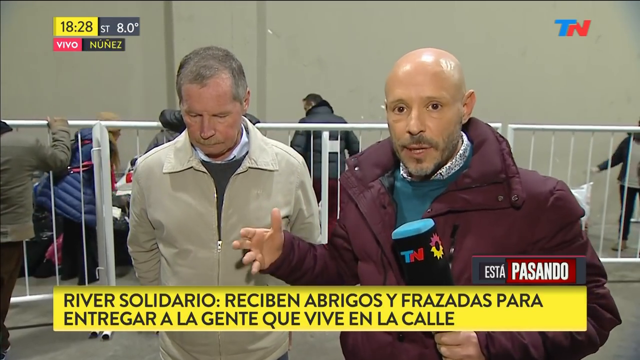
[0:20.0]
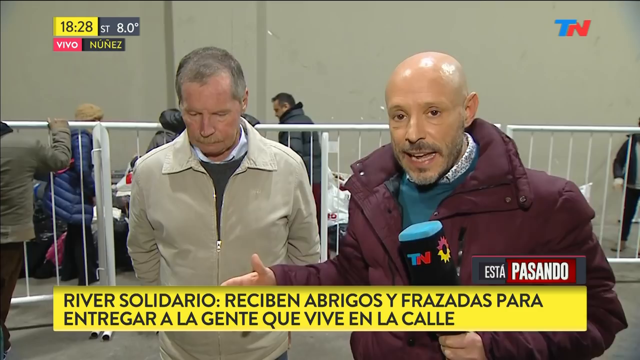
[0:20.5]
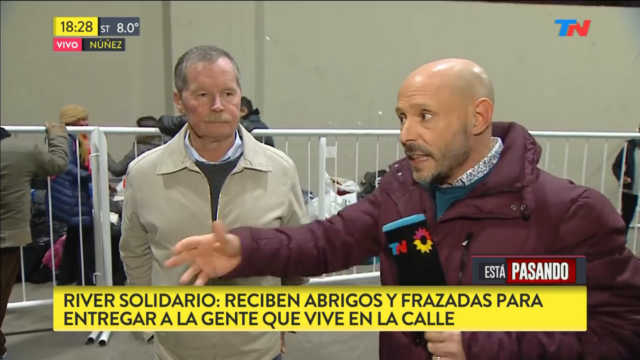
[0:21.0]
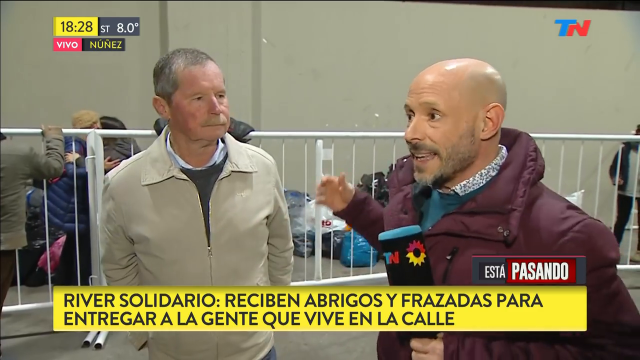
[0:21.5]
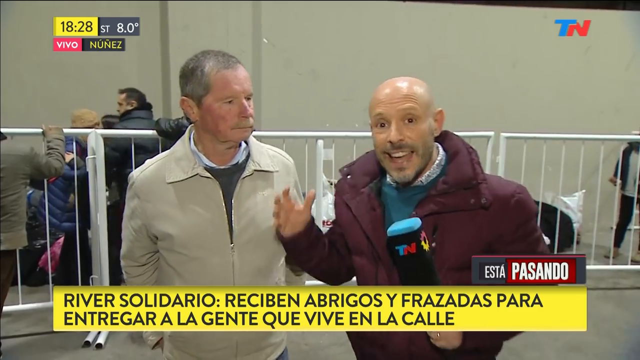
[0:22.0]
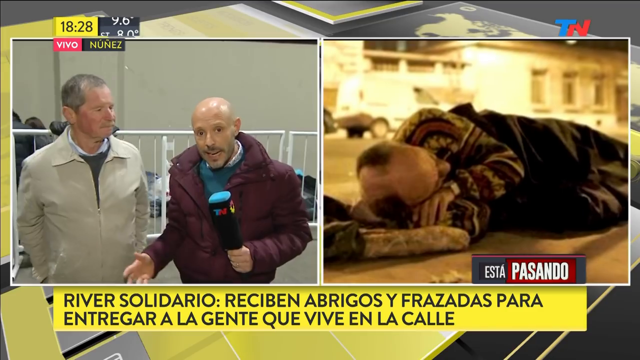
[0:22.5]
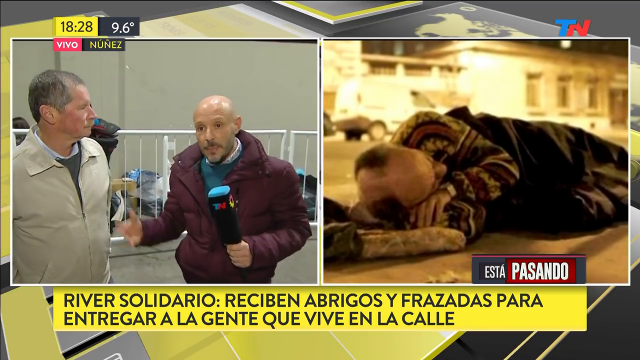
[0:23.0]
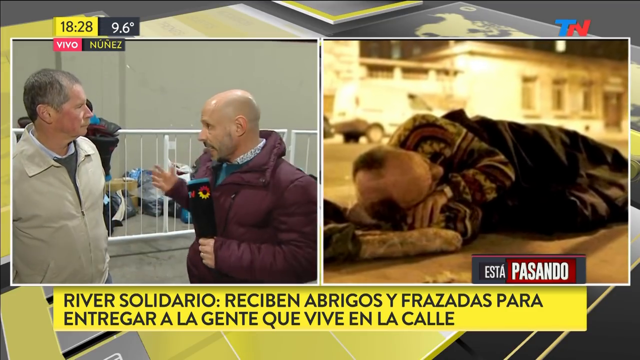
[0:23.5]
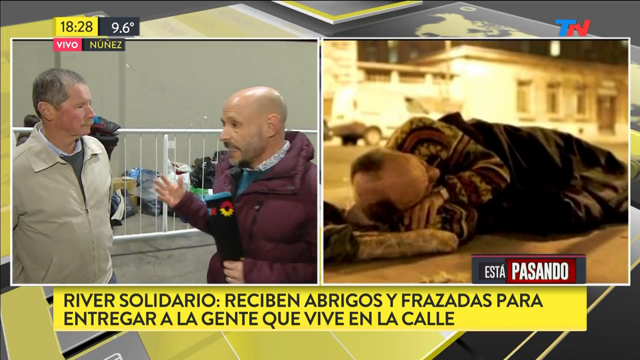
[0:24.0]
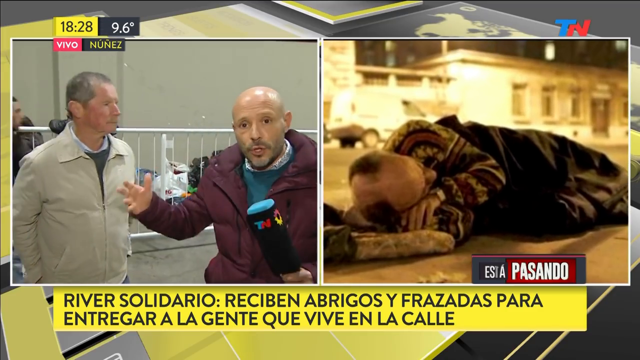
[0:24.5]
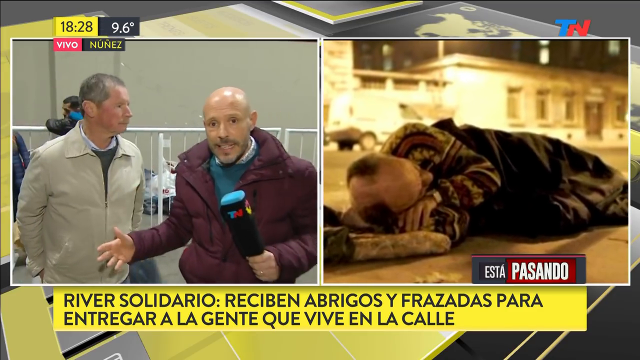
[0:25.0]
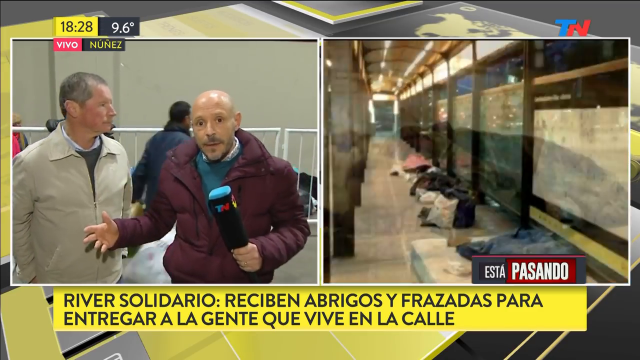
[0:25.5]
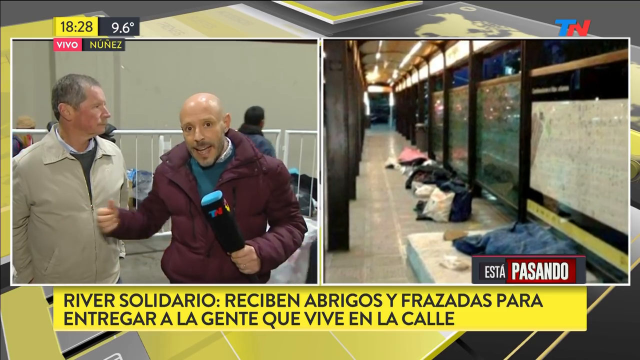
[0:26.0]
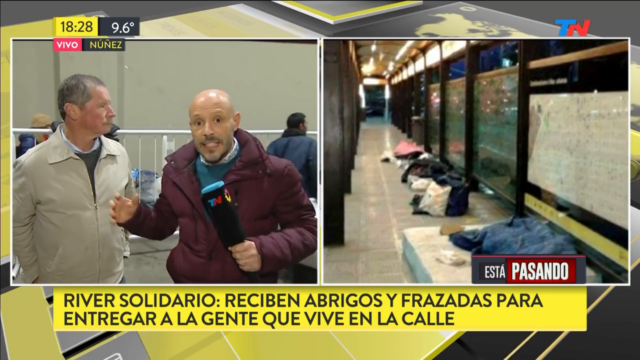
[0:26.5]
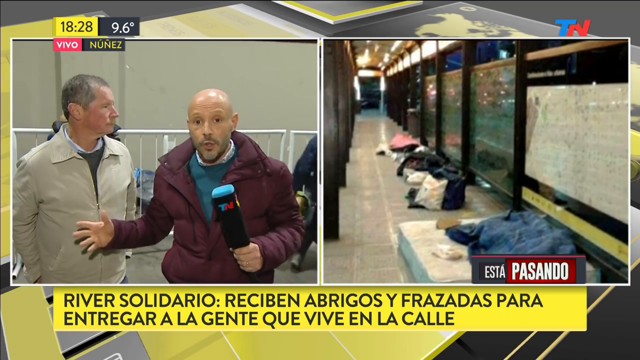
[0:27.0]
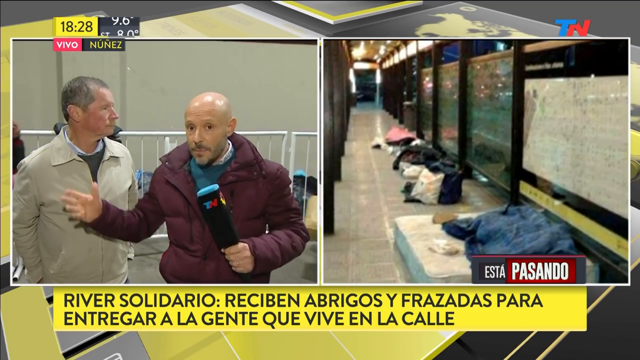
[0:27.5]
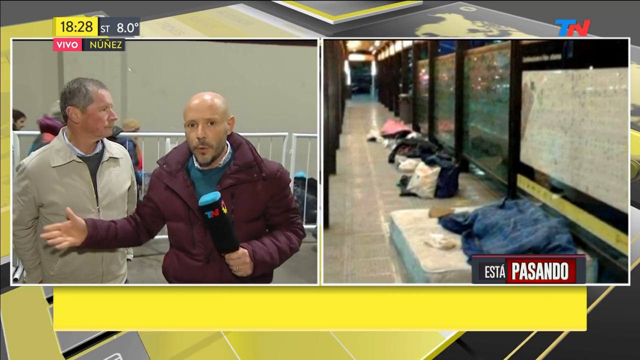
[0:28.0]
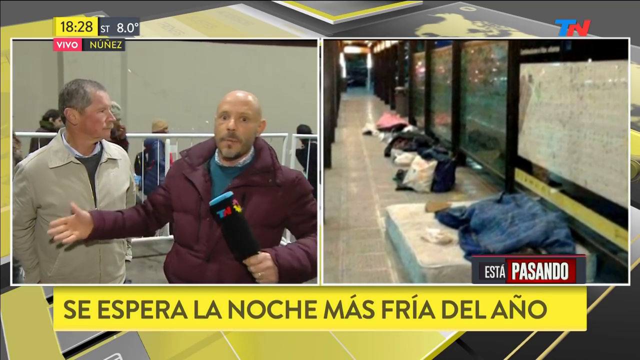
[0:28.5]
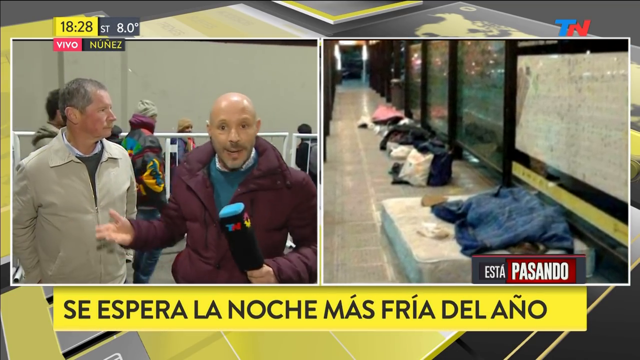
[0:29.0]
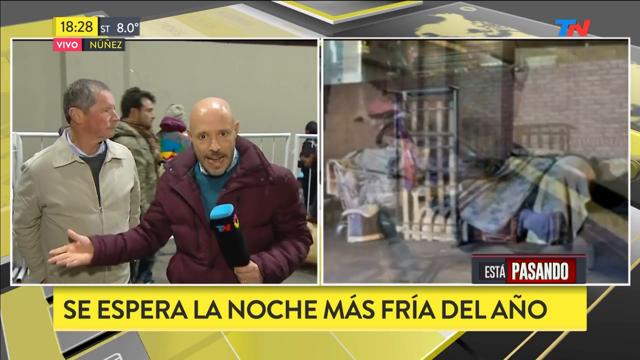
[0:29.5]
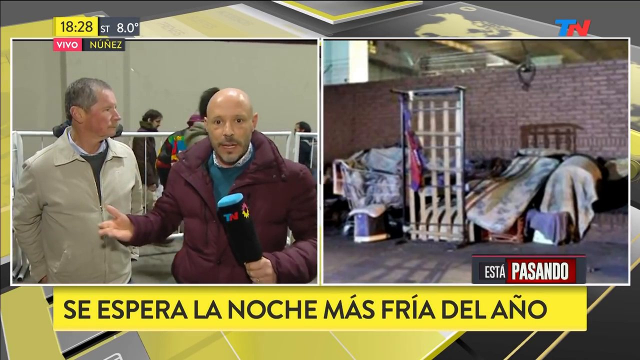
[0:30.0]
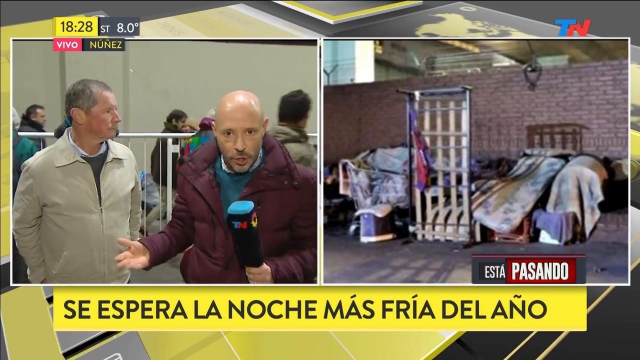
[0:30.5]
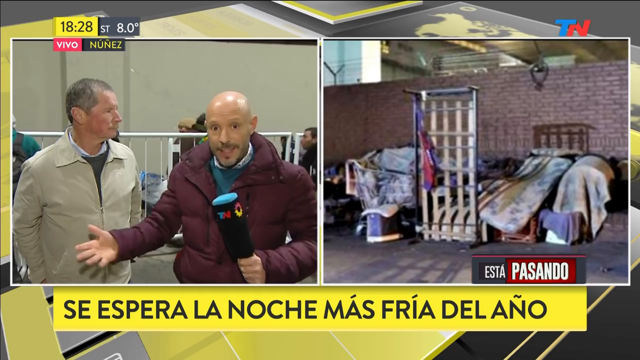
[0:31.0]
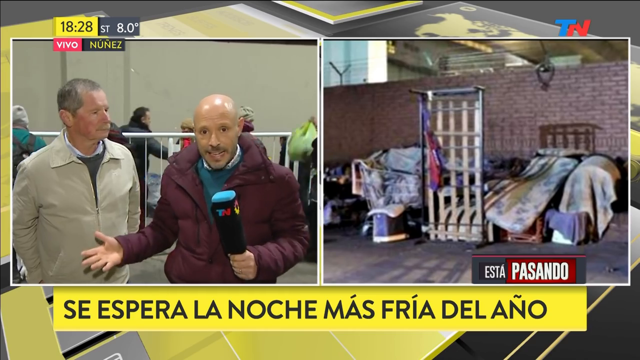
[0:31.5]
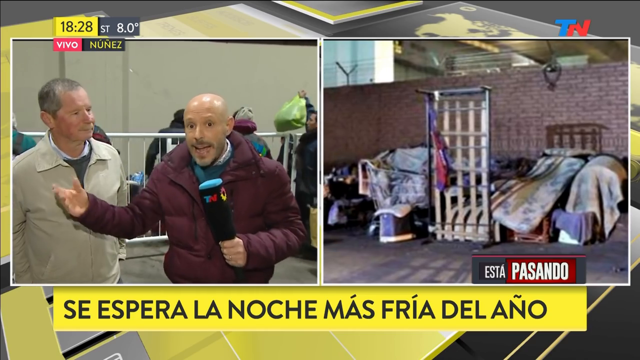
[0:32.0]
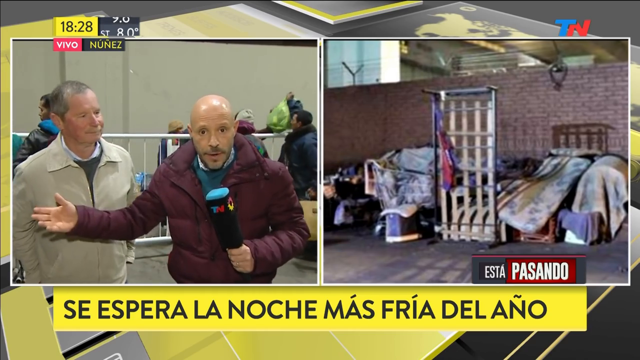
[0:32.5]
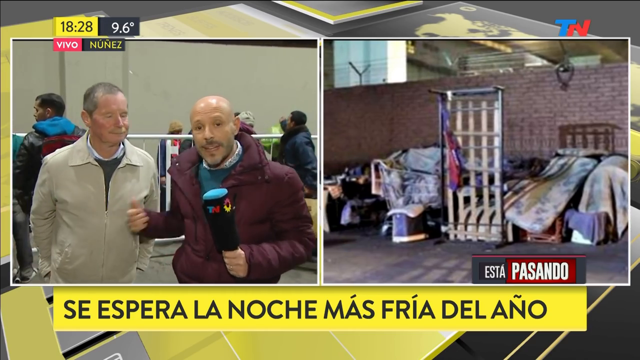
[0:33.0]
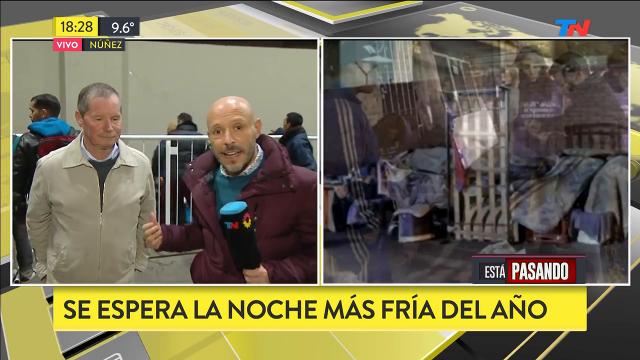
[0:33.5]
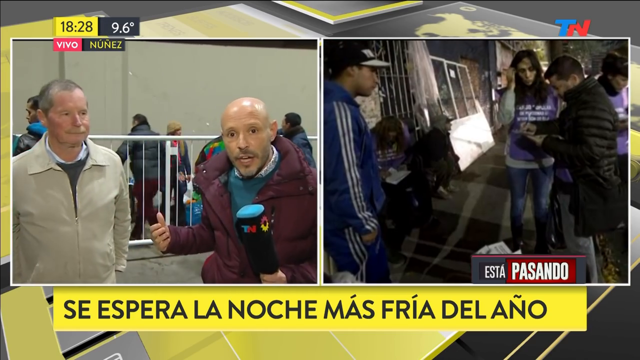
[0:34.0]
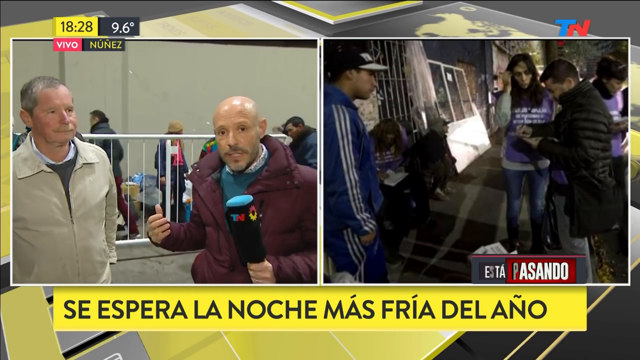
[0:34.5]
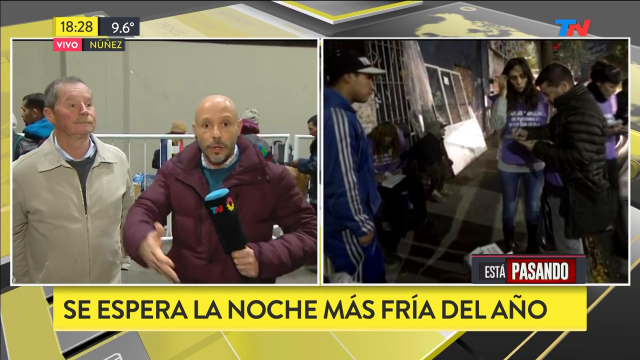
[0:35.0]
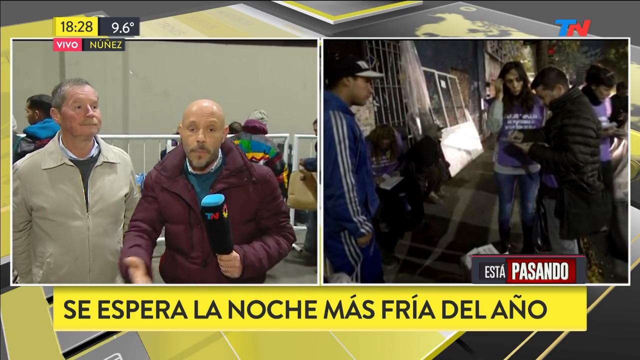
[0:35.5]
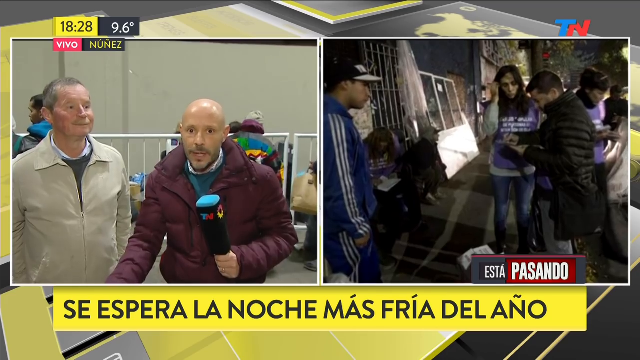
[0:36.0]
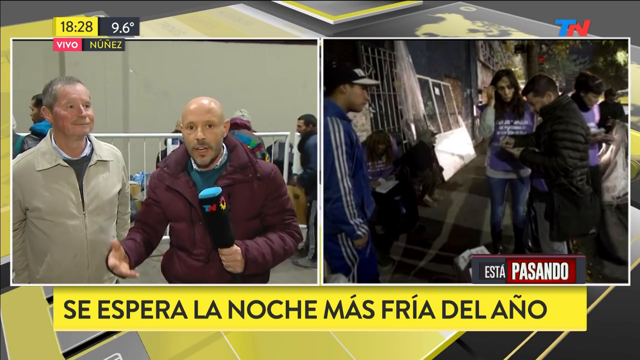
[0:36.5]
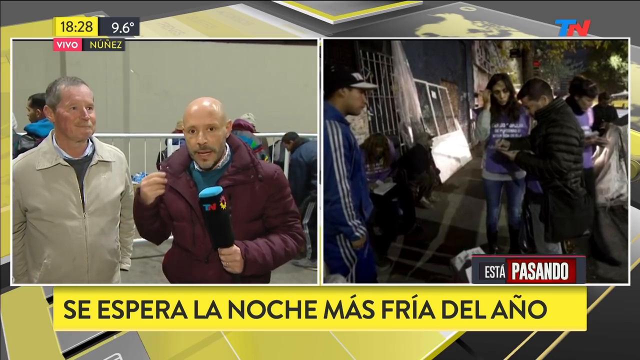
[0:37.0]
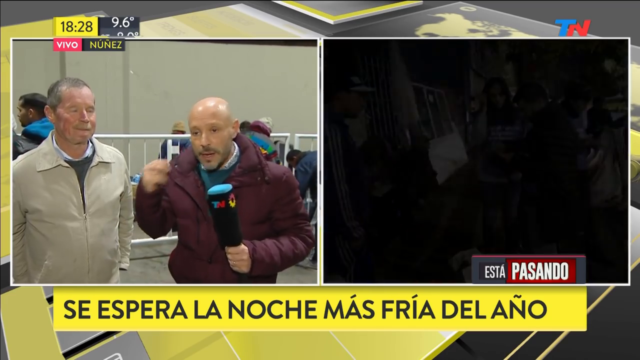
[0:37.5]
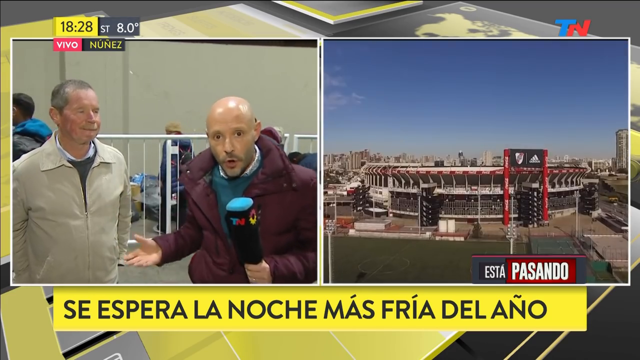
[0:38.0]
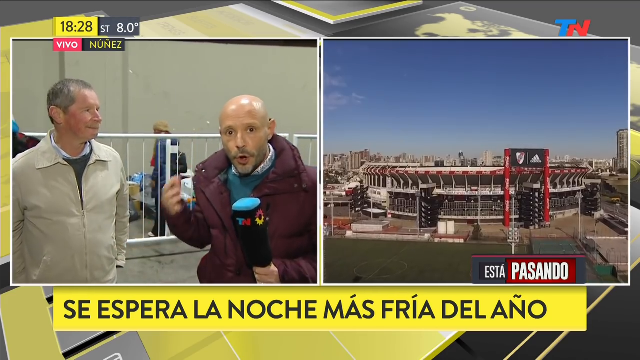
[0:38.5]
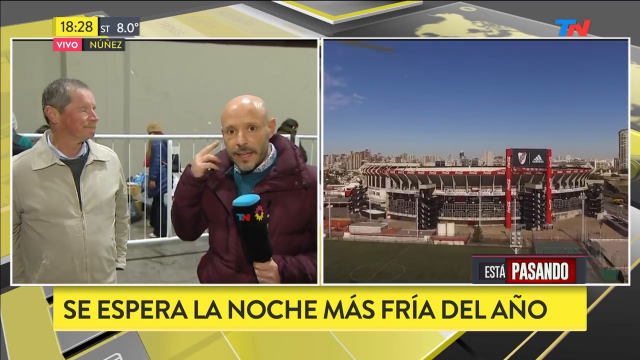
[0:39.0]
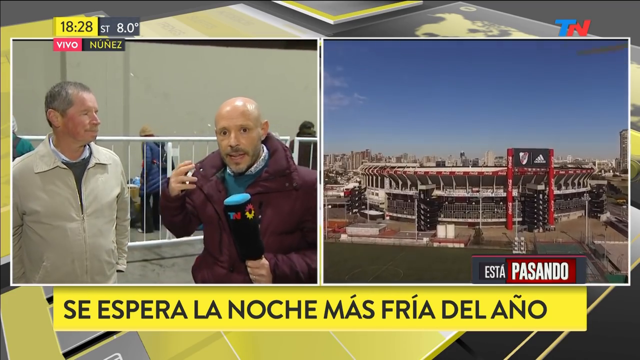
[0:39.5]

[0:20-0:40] The journalist interviews the other man, who wears a jacket, a gray sweater and a white shirt and seems to be 50 to 60 years old. On the right side, a man in a jersey is sleeping with a blanket, possibly one that has just been donated. The abbreviation "TN" appears in blue and red in the top corner of the video. Other people, seemingly homeless, sleep on mattresses on the streets. The journalist continues interviewing the man standing next to him, who does not seem to have had a chance to talk yet.